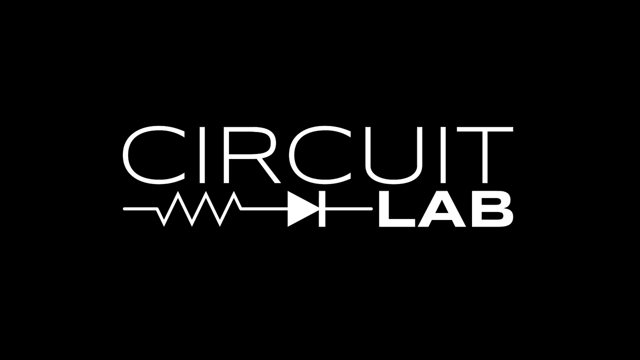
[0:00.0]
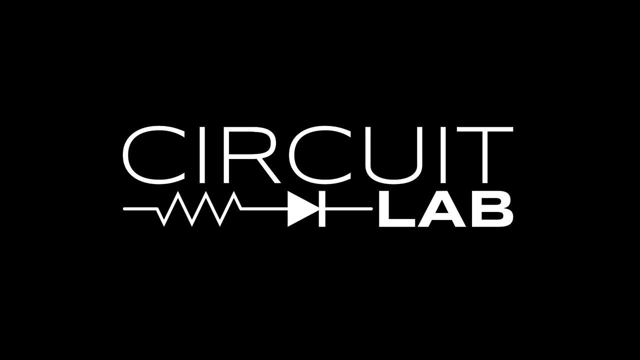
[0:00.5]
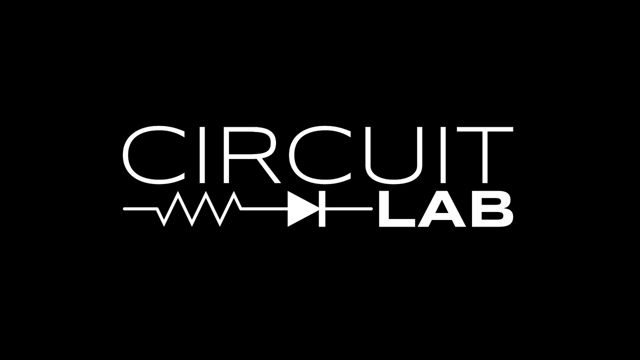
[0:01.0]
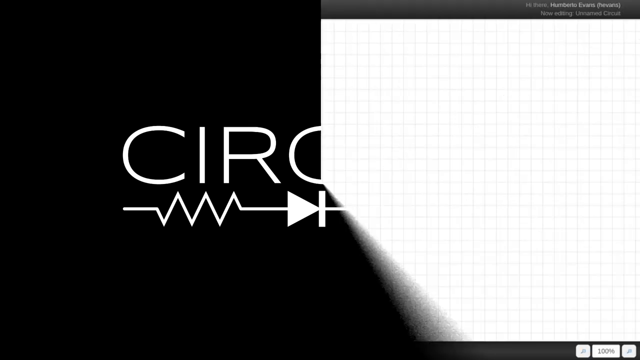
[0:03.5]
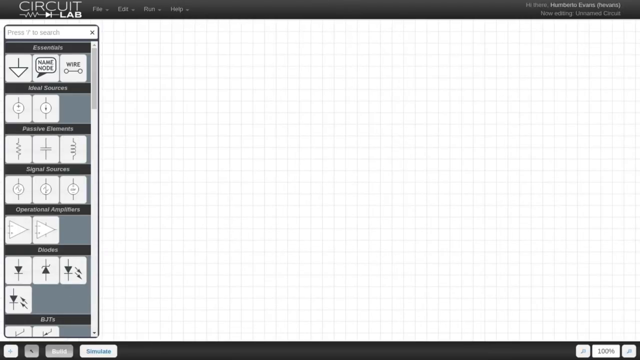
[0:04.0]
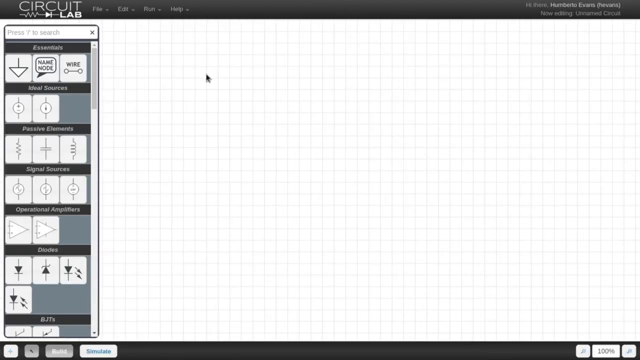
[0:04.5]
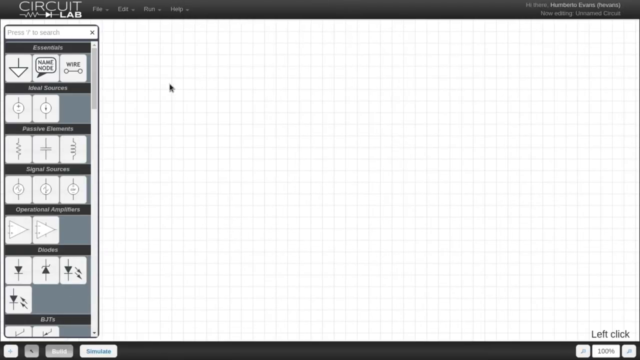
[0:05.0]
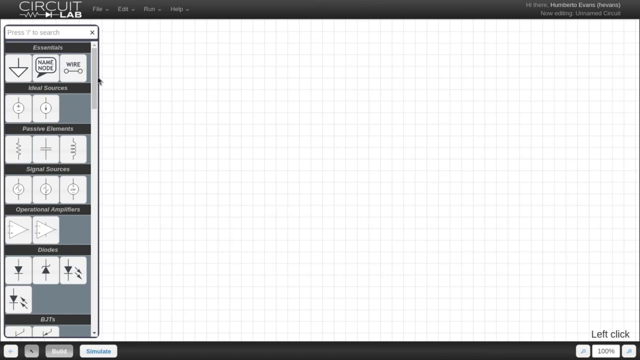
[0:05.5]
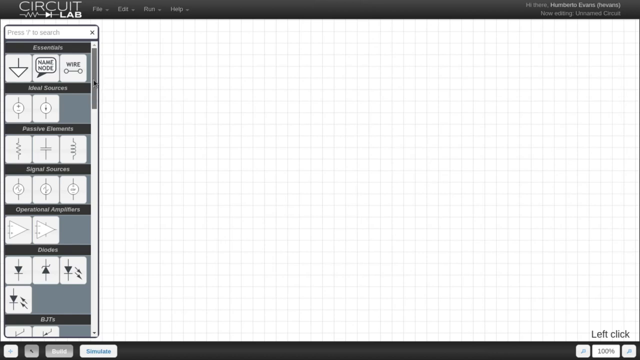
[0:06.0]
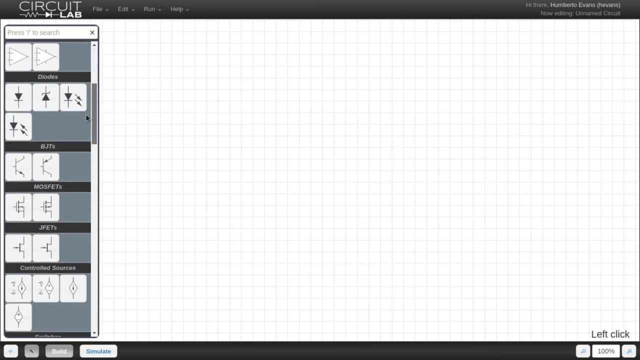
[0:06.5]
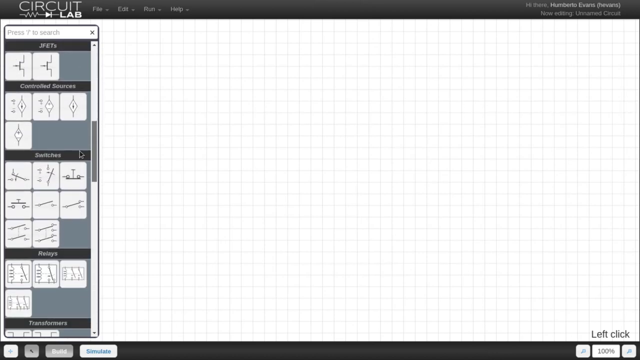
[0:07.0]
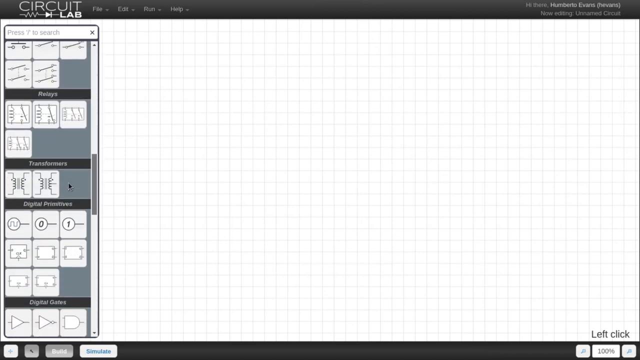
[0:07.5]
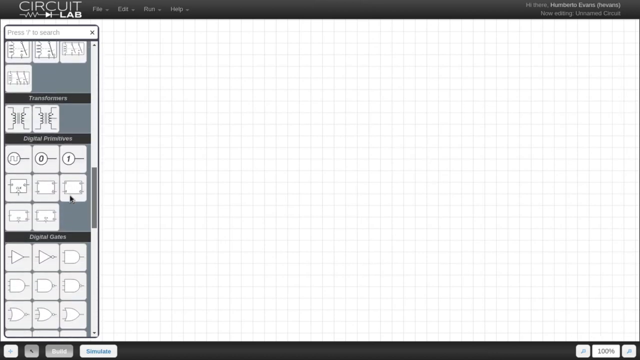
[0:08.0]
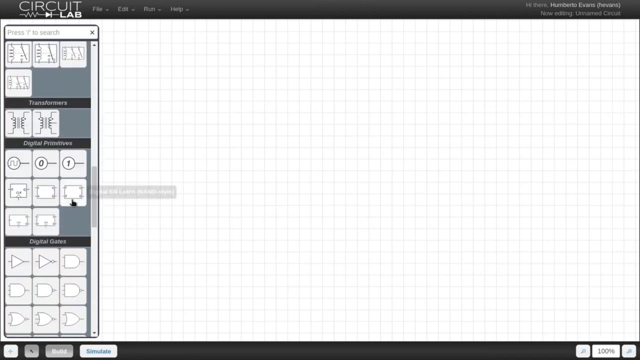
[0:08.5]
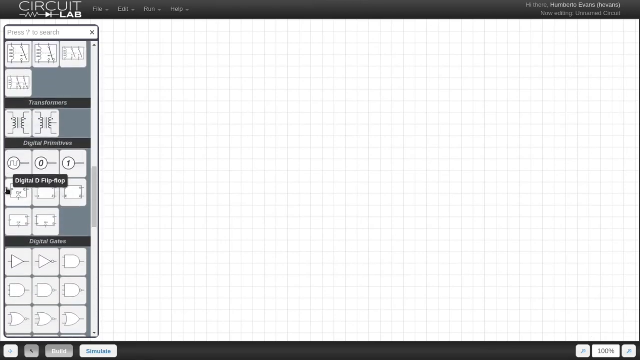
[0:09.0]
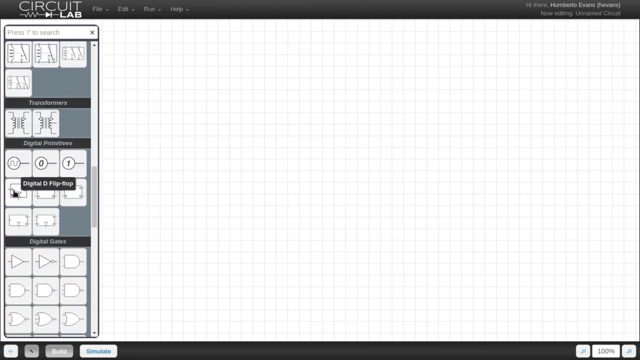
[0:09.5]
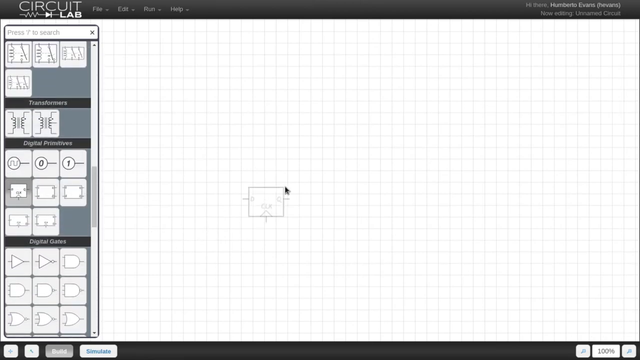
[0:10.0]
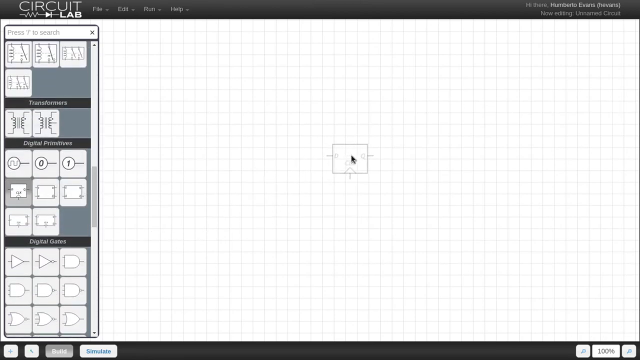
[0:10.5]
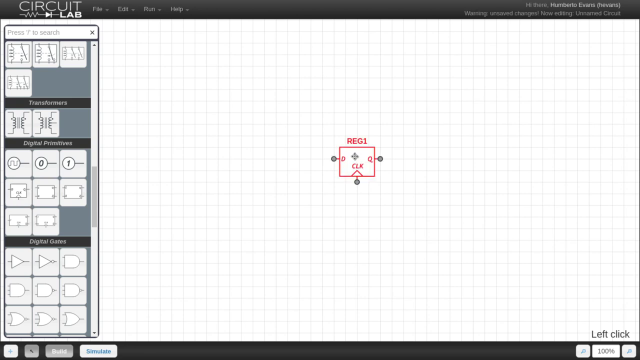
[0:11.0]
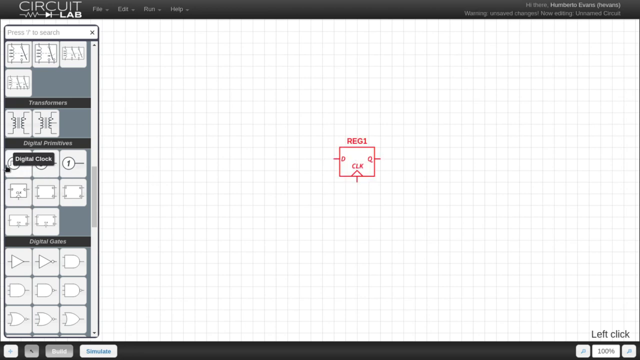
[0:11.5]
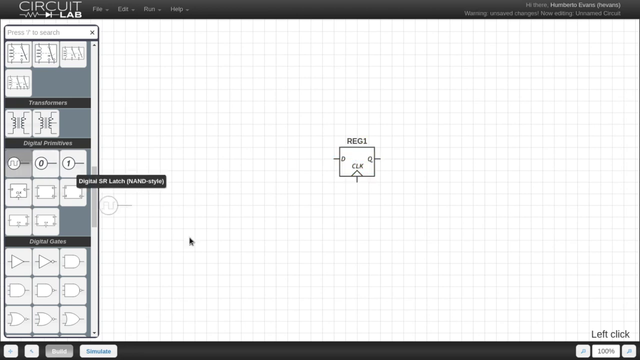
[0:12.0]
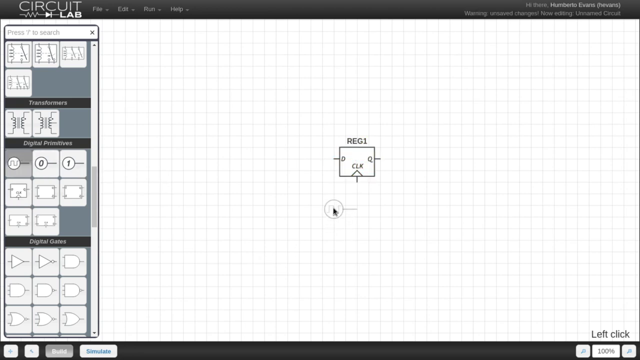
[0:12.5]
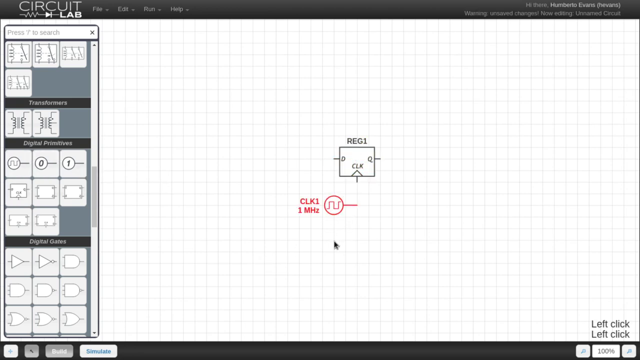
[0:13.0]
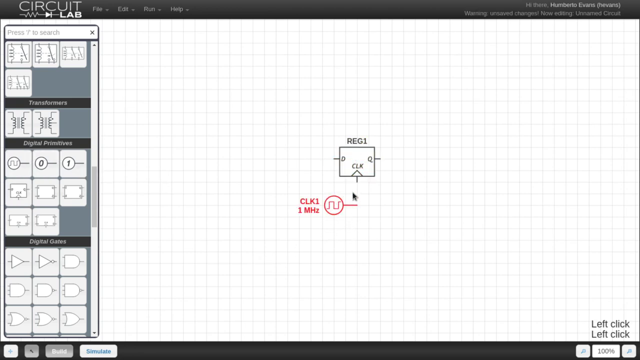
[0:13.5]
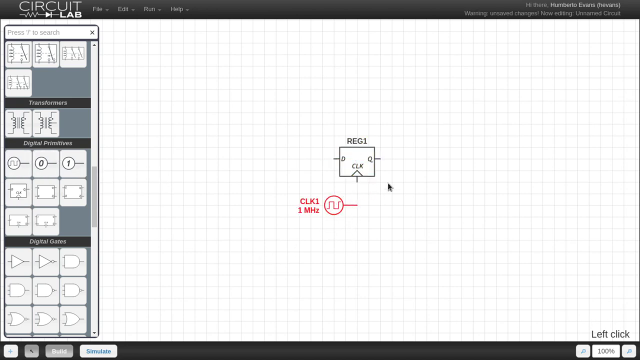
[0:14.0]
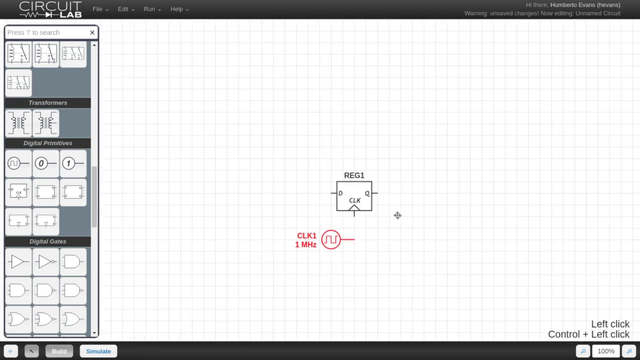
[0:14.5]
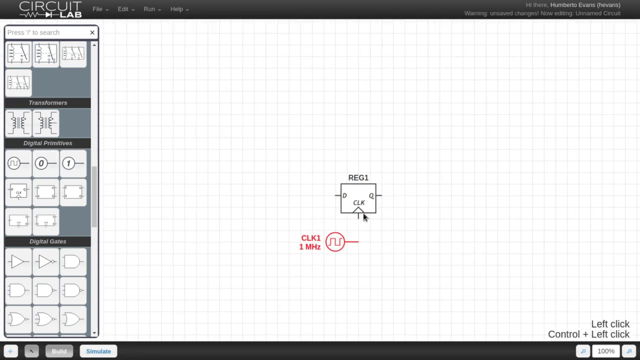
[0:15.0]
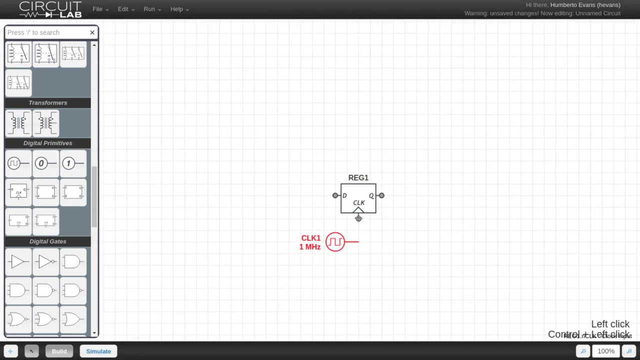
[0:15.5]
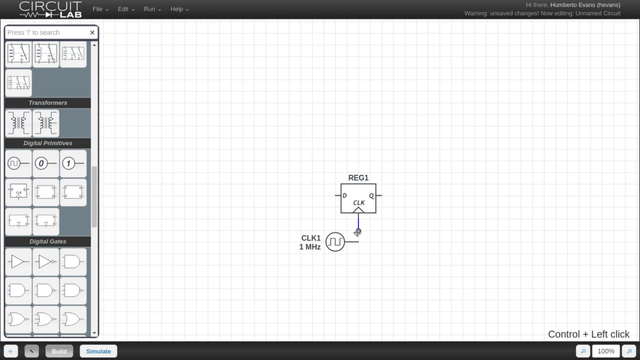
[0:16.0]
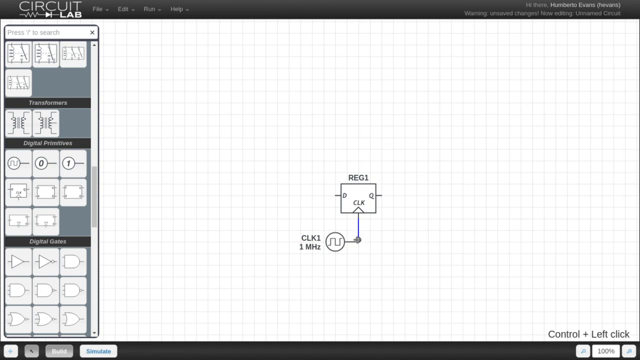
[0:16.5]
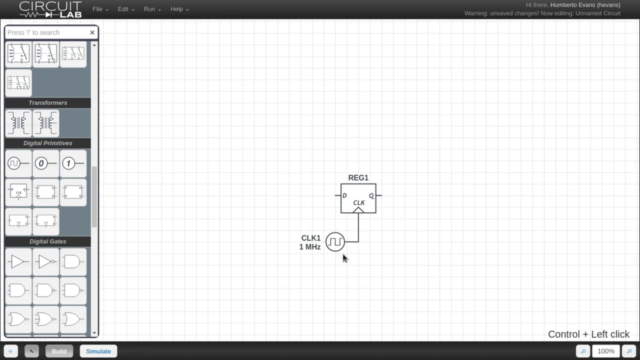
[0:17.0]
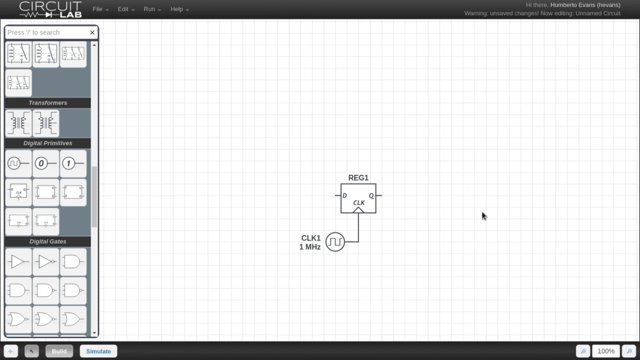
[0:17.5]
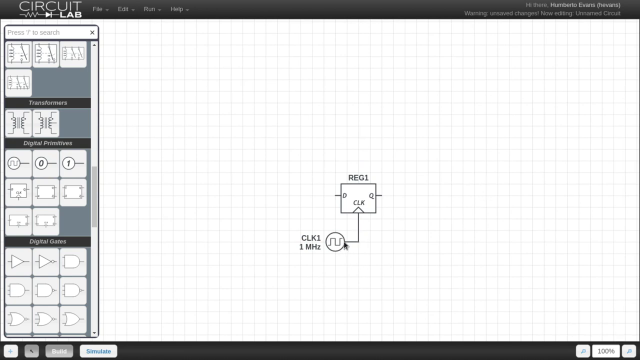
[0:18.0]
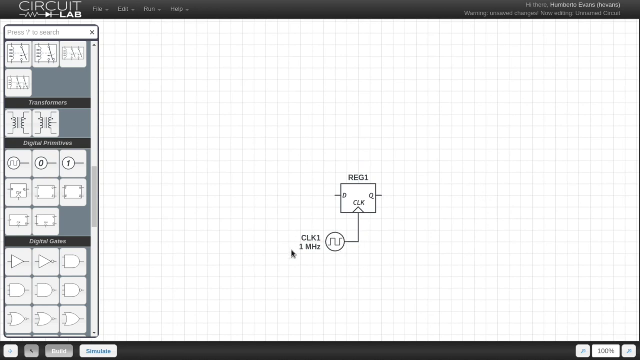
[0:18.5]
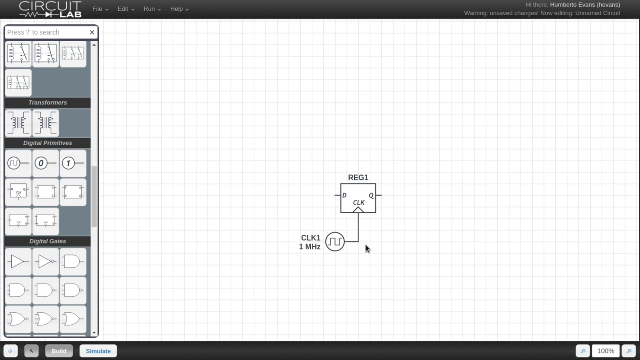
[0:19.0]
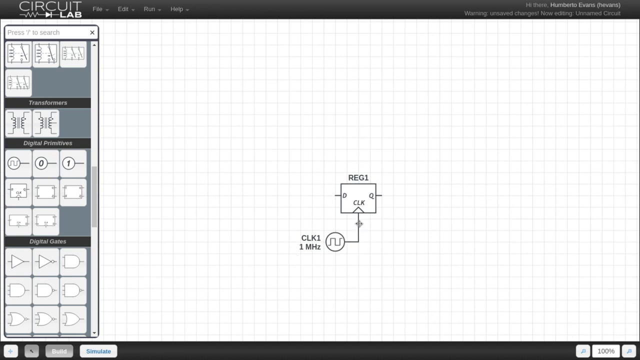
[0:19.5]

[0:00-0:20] The video opens with a logo called Circuit Lab, and then what seems to be a canvas to be filled appears. In the left corner there are something like two elements, apparently for making something like a circuit board. The video is a recording of a program: the person picks up some of the tools, drags them to the canvas and connects them with the cursor. The software appears to be used to create circuits, and the video is perhaps a tutorial or a presentation of the program. The tools in the left corner can be dragged to the empty canvas to create circuits and apparently include connectors, resistances and other circuit parts. Along the top is a menu for the program, and the file name appears at the top right.